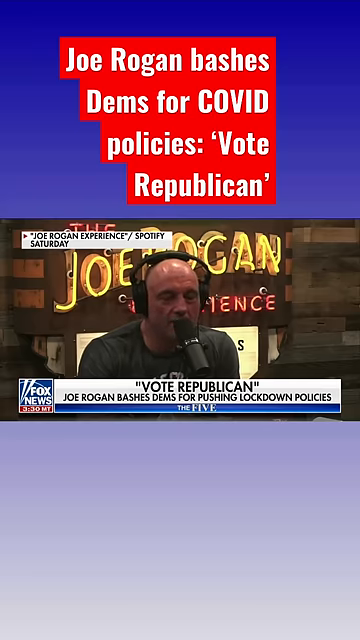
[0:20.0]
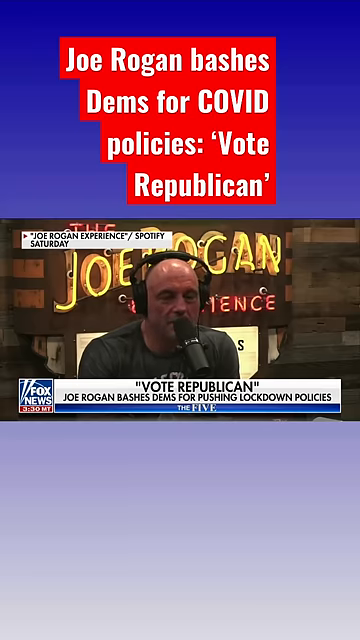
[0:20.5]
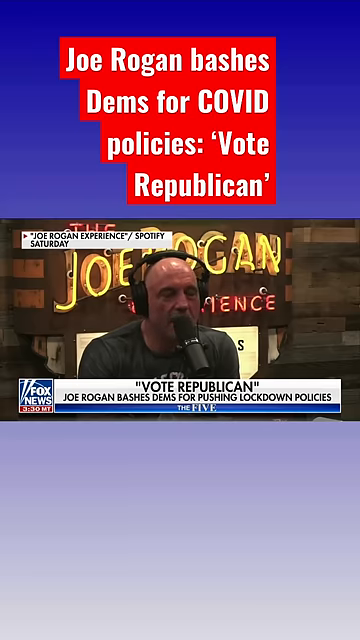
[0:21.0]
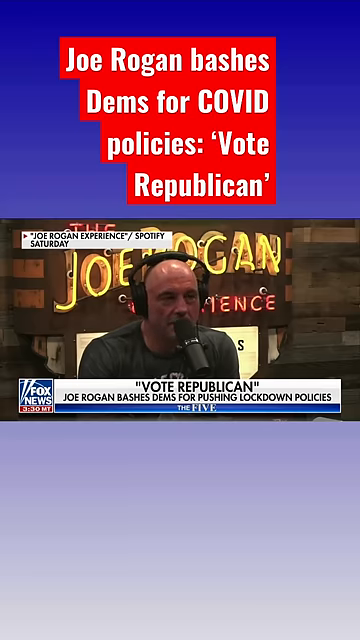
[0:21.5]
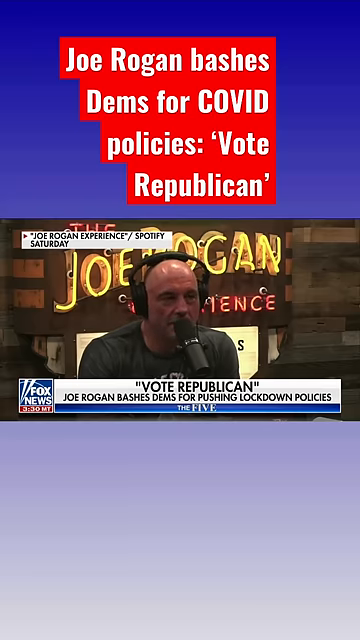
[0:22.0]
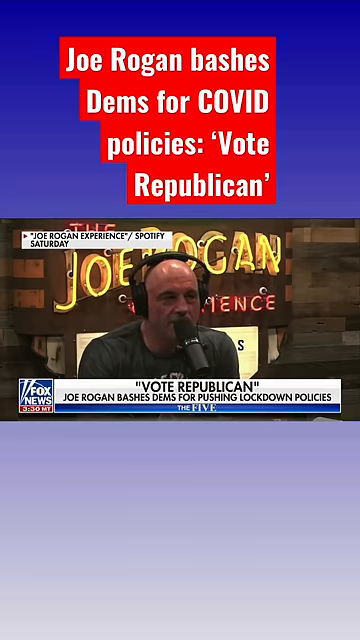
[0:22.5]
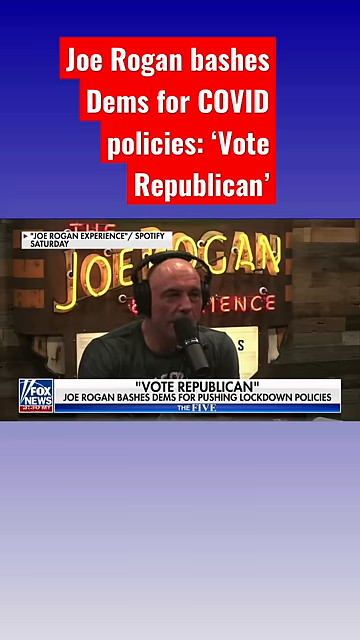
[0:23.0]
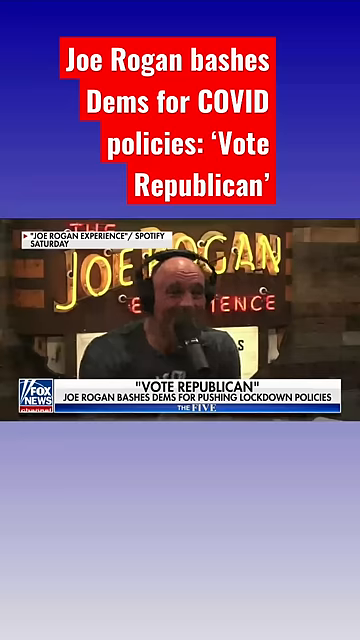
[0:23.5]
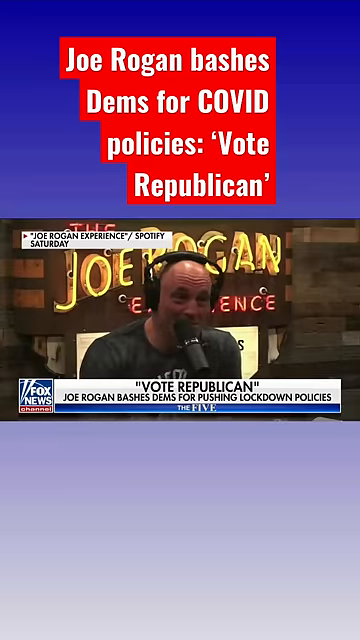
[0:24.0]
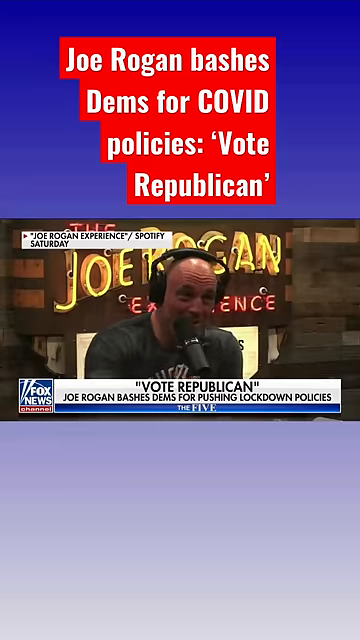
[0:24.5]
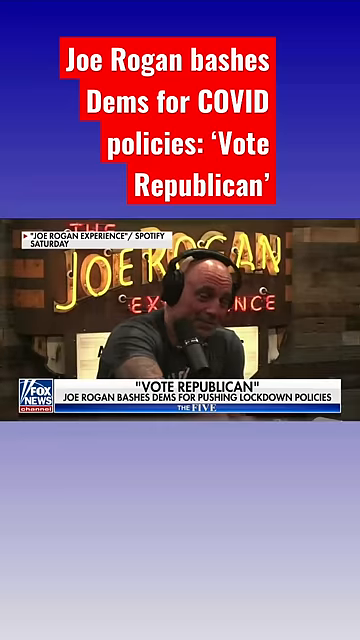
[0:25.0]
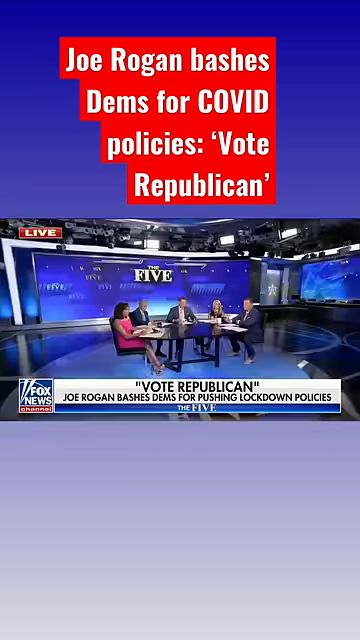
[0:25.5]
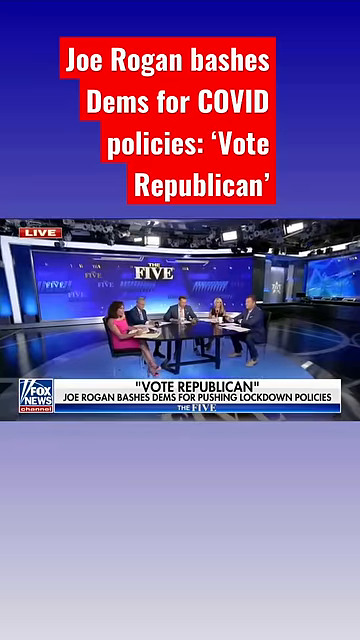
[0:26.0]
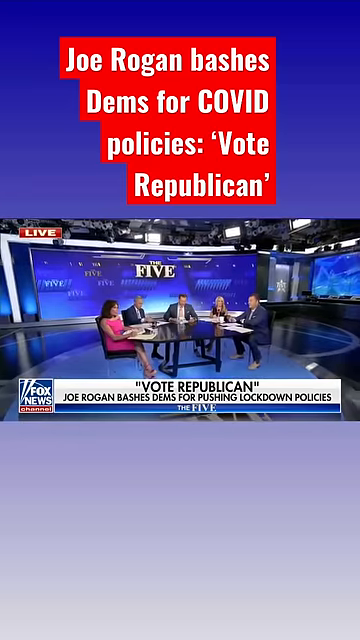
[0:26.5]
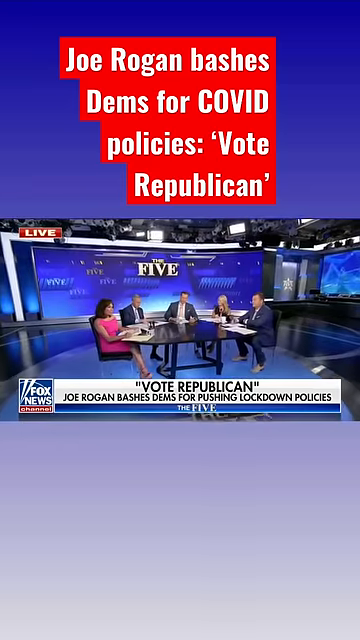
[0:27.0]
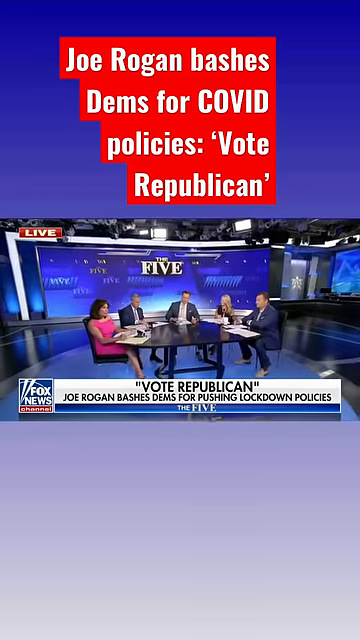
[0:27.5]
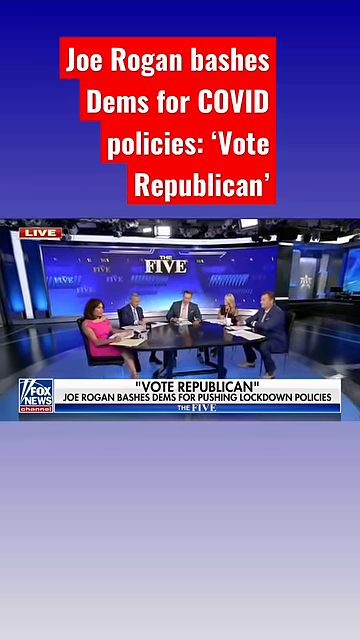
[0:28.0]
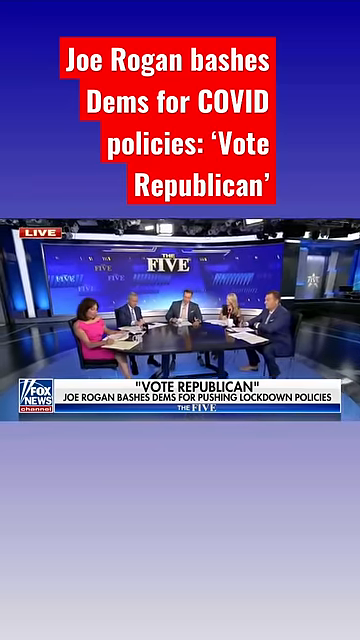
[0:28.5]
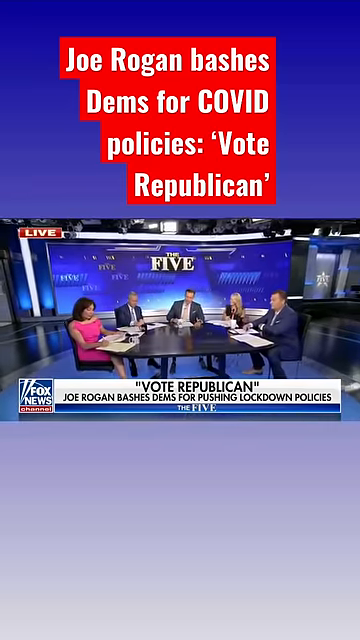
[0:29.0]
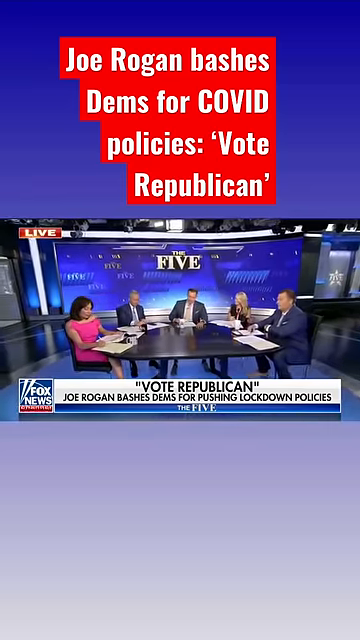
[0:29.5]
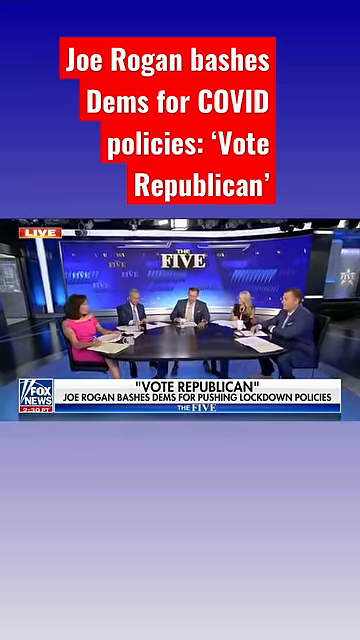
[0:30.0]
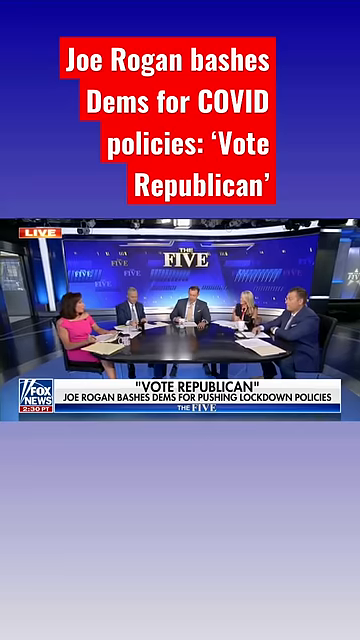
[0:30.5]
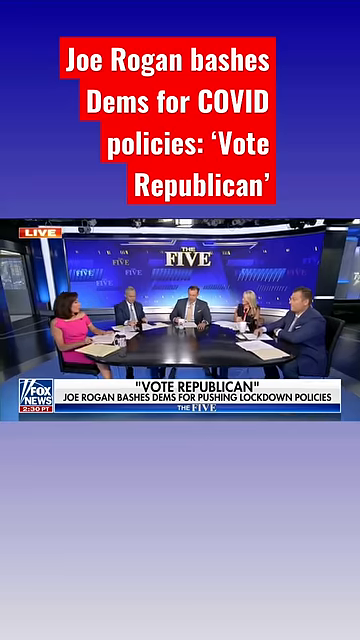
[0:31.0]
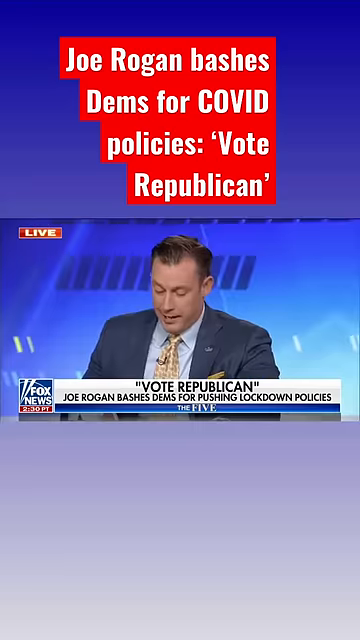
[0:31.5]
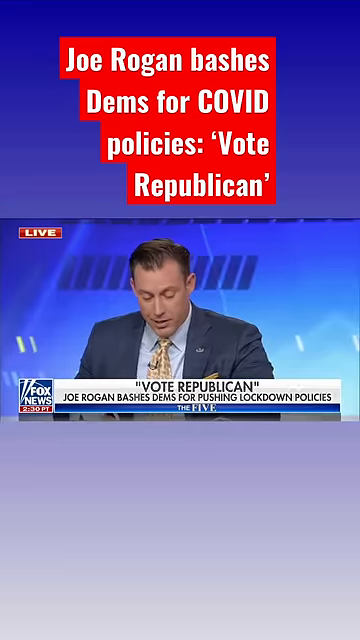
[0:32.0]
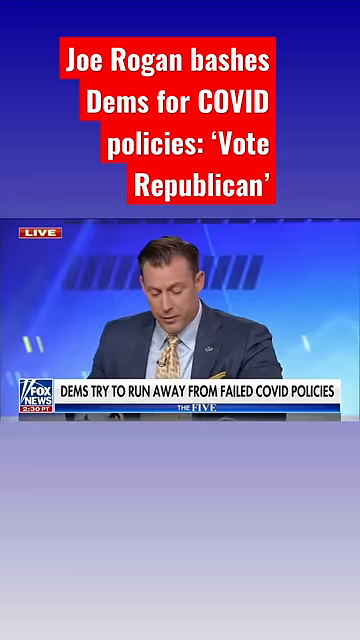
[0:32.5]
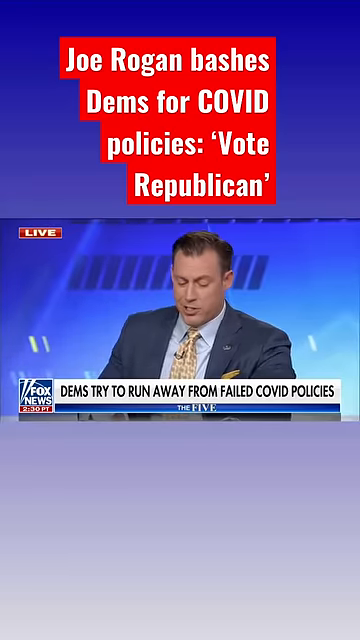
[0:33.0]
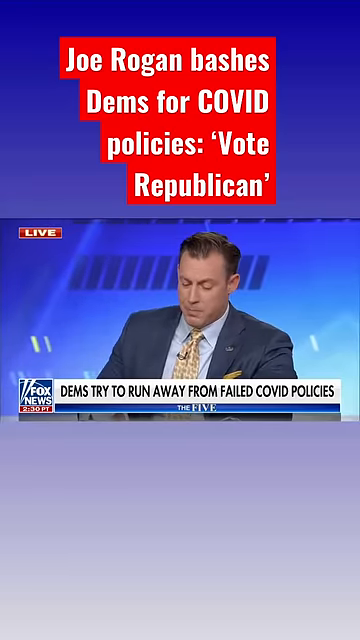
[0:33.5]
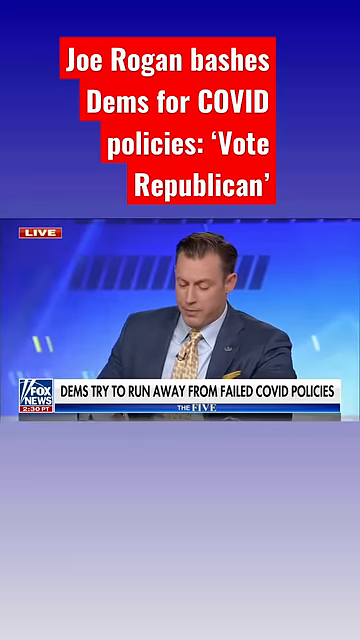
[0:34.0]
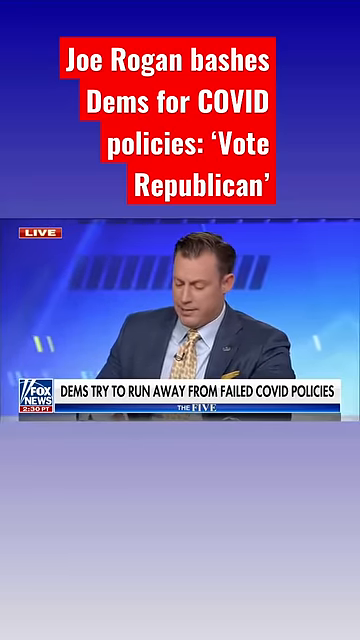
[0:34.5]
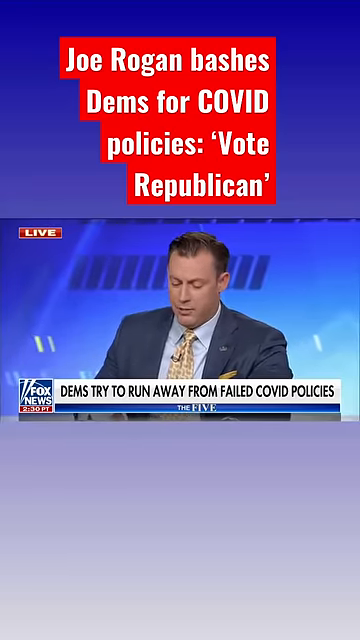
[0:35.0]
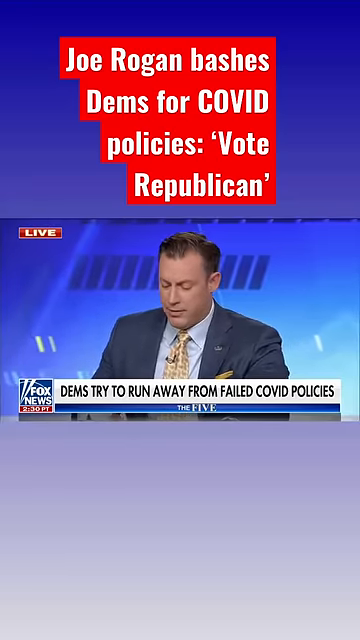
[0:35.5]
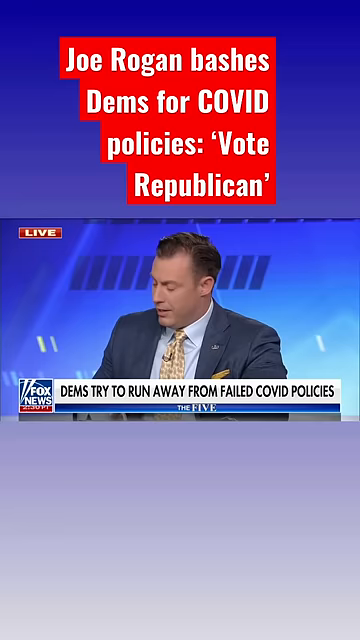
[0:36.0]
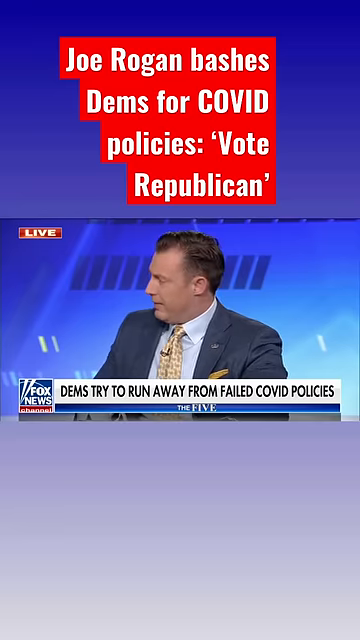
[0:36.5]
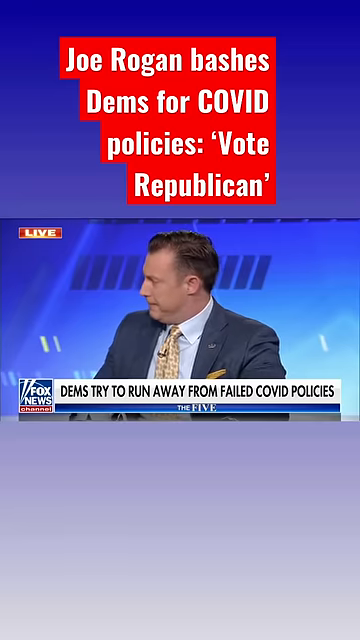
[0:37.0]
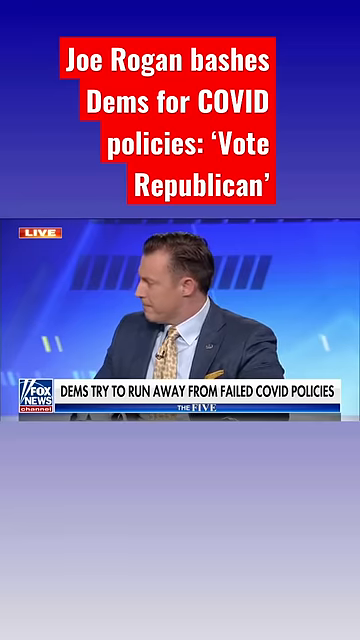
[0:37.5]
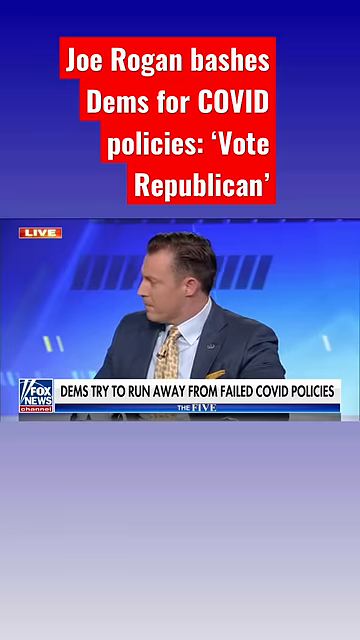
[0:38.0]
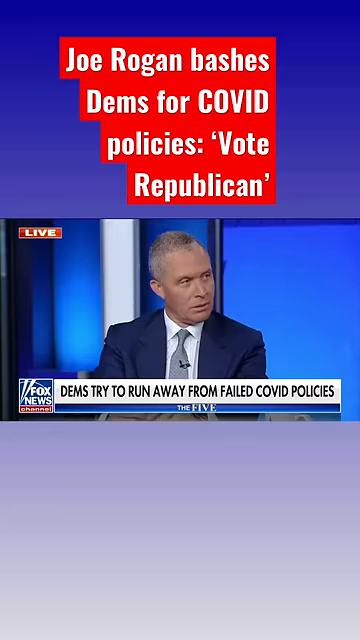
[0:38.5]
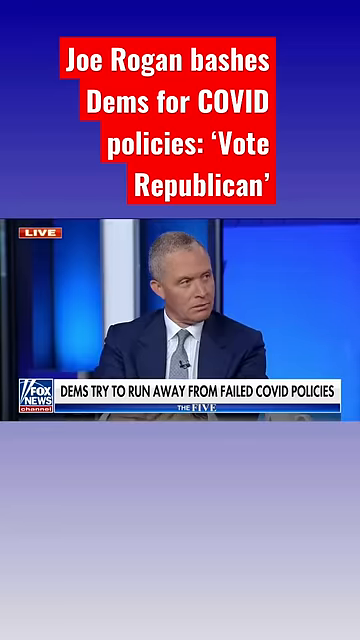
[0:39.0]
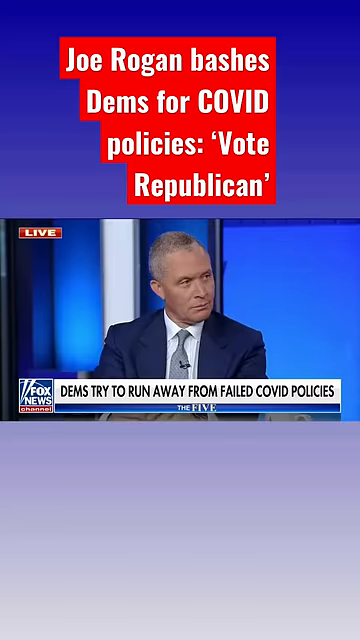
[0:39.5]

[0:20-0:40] The scene is unchanged. A person is talking and seems to be asking for votes for Republicans. The show appears to be named Vote Republican, with Joe Rogan and a line about Dems trying to run away from failed public policies, along with "the five." It is a live telecast show discussing policies and asking for votes for Republicans. The Republican being presented is President Donald J. Trump.